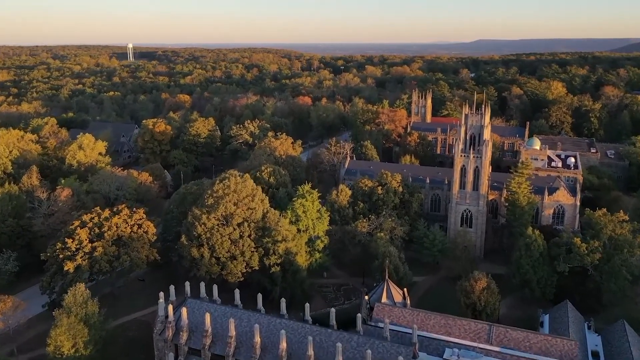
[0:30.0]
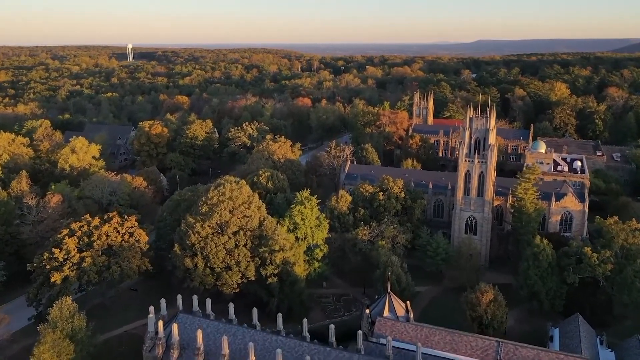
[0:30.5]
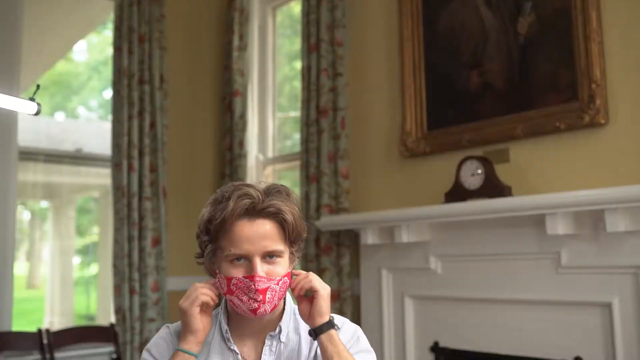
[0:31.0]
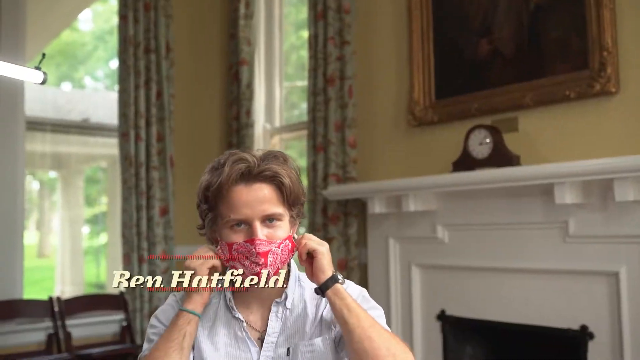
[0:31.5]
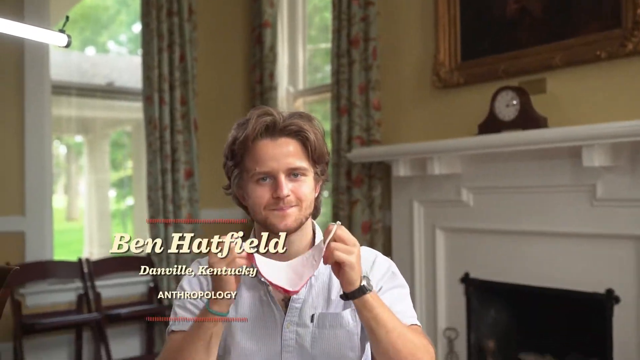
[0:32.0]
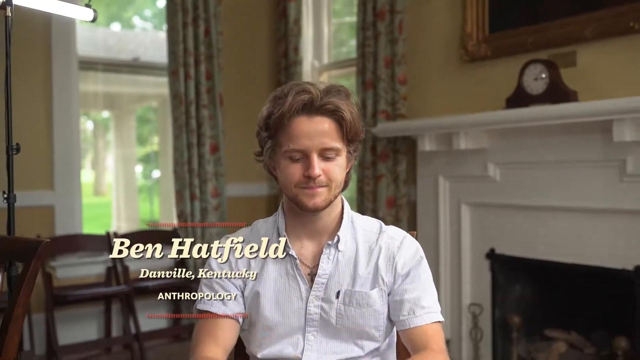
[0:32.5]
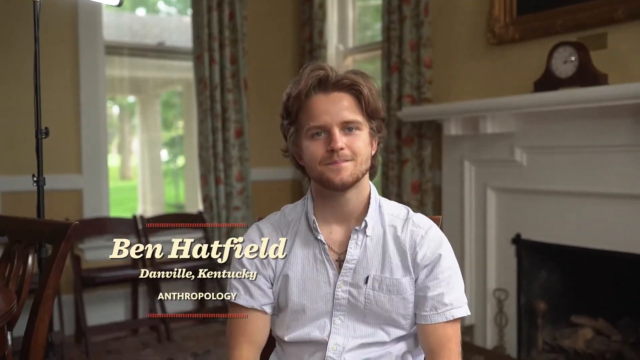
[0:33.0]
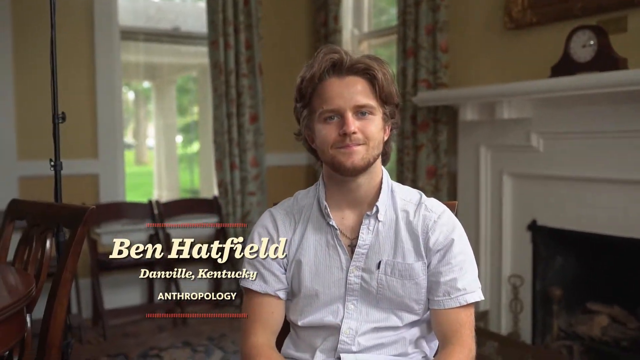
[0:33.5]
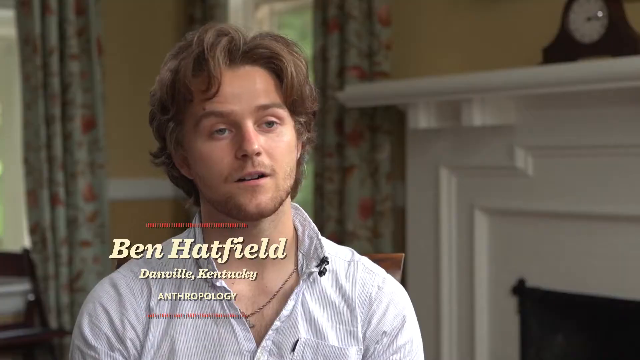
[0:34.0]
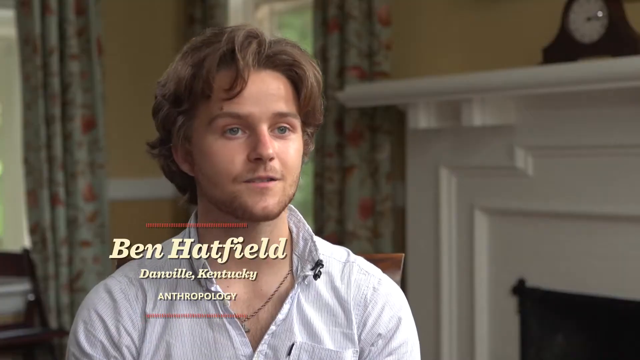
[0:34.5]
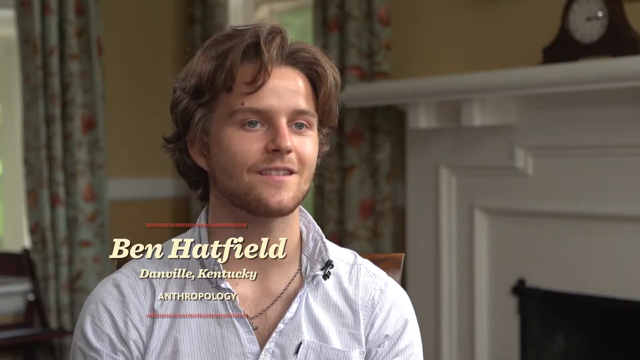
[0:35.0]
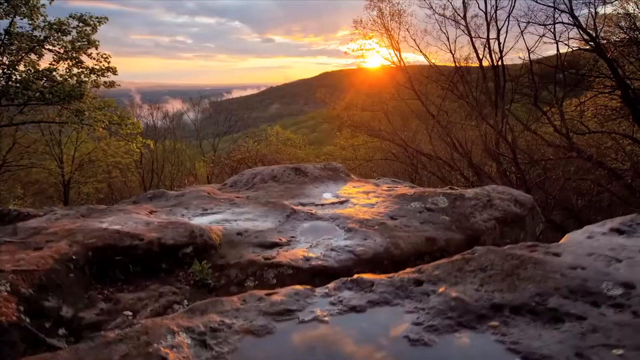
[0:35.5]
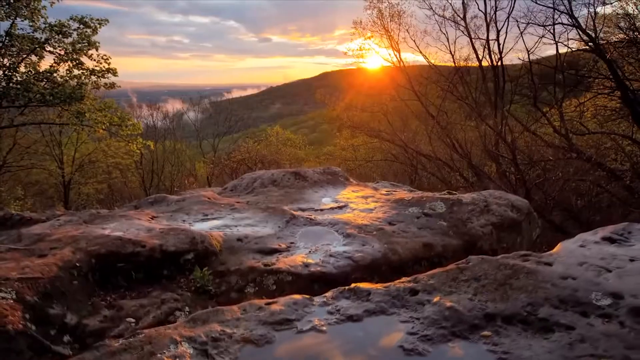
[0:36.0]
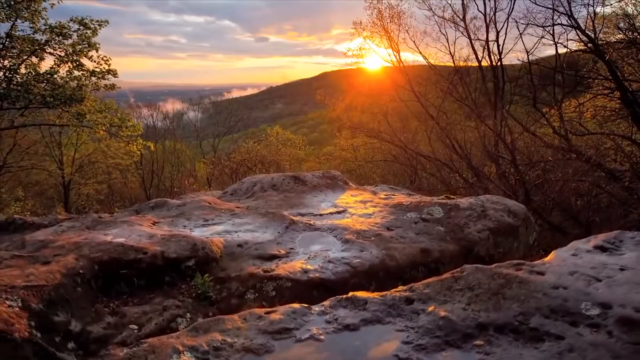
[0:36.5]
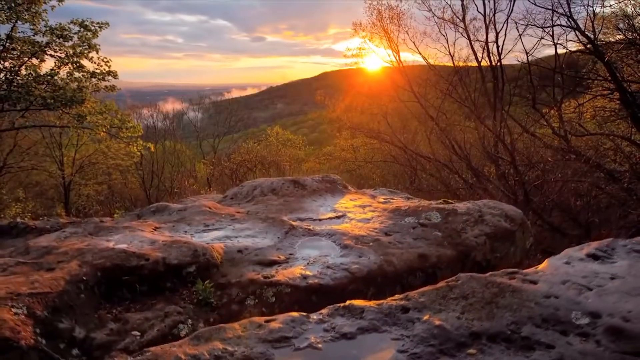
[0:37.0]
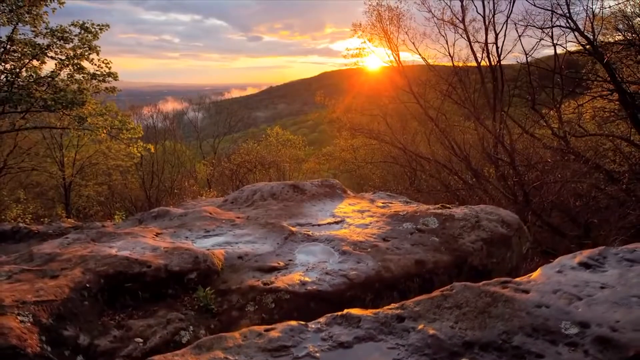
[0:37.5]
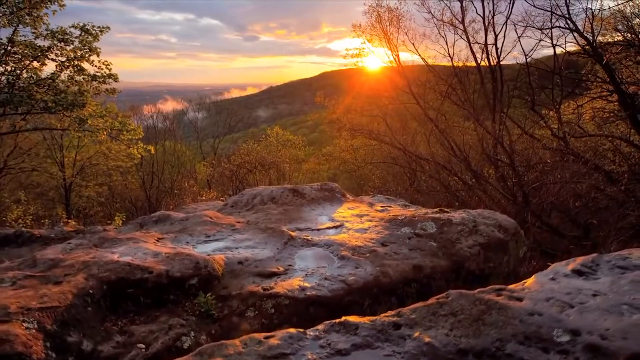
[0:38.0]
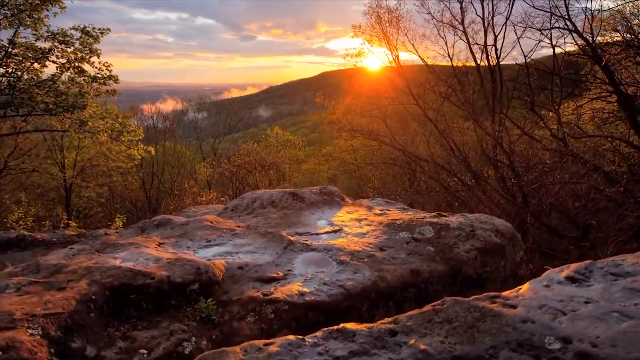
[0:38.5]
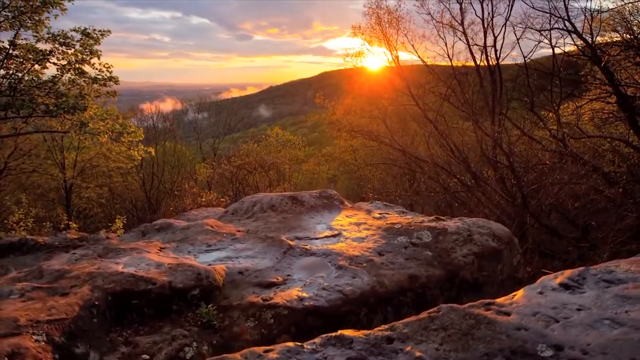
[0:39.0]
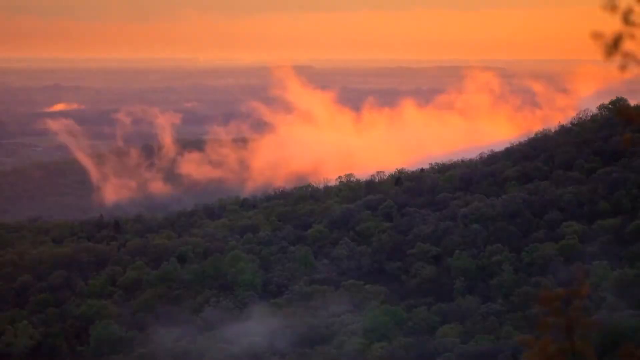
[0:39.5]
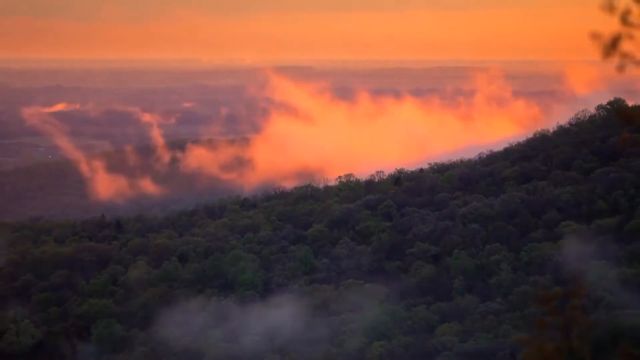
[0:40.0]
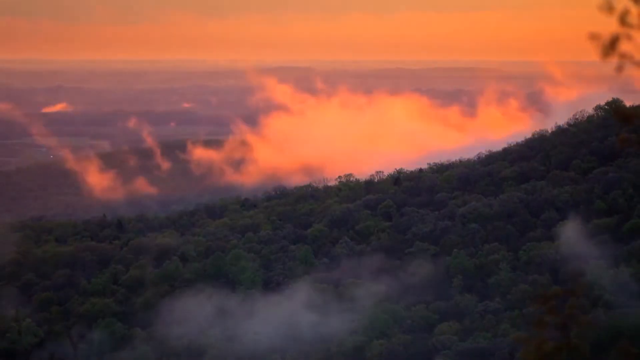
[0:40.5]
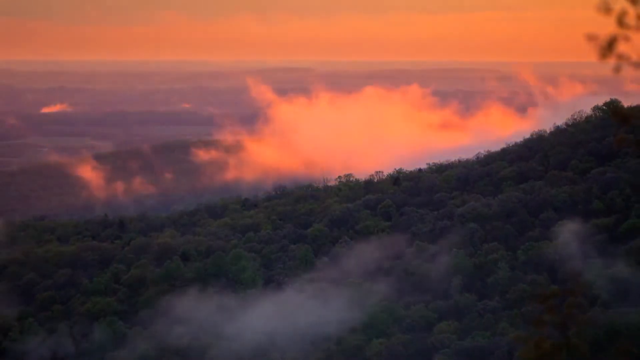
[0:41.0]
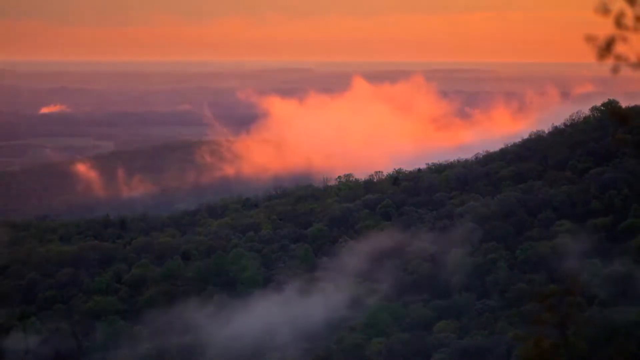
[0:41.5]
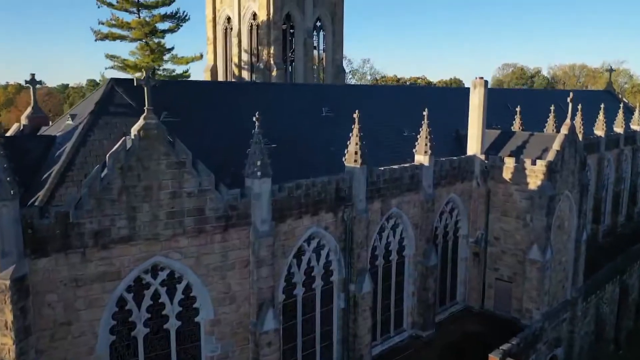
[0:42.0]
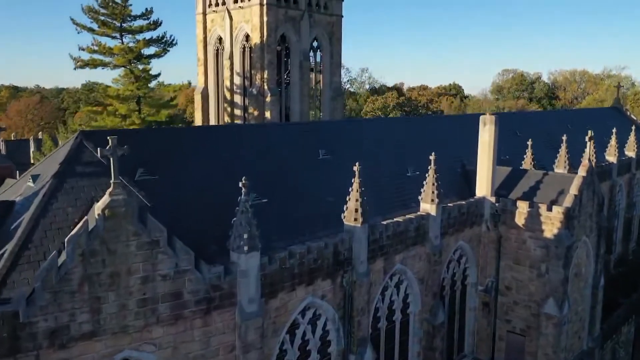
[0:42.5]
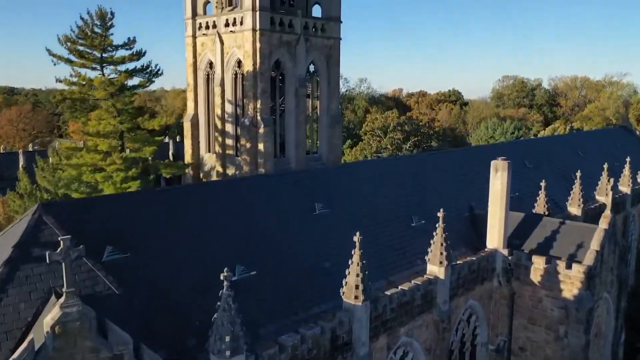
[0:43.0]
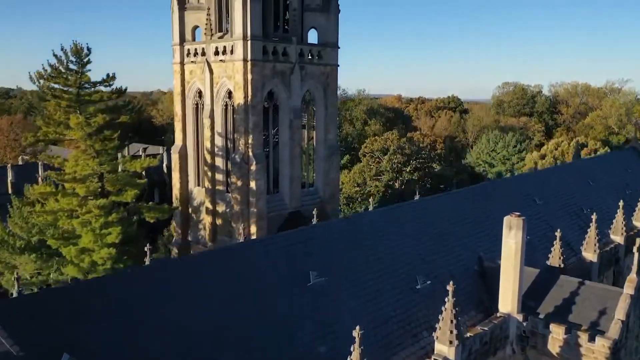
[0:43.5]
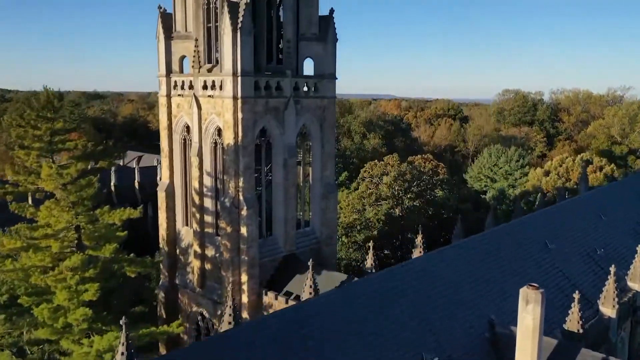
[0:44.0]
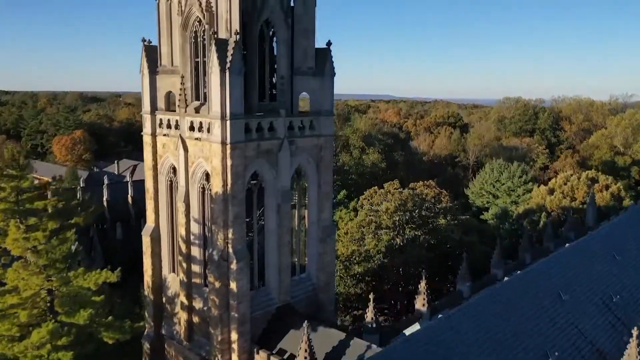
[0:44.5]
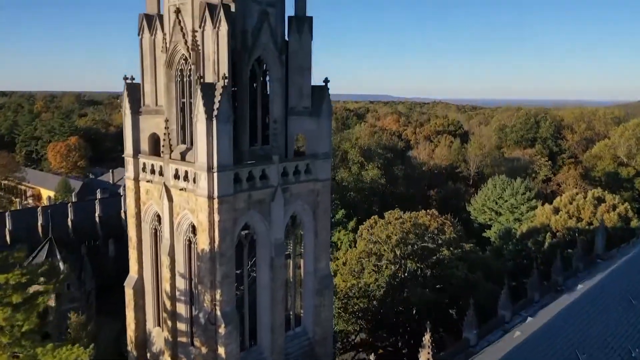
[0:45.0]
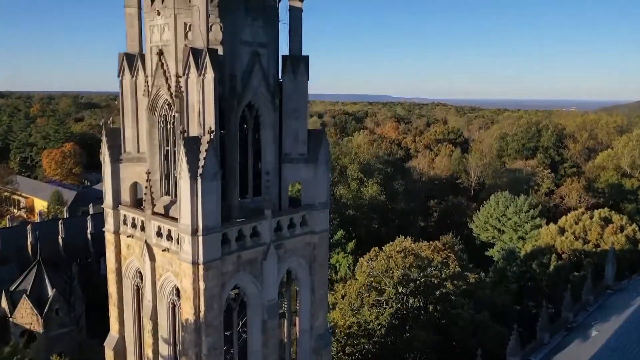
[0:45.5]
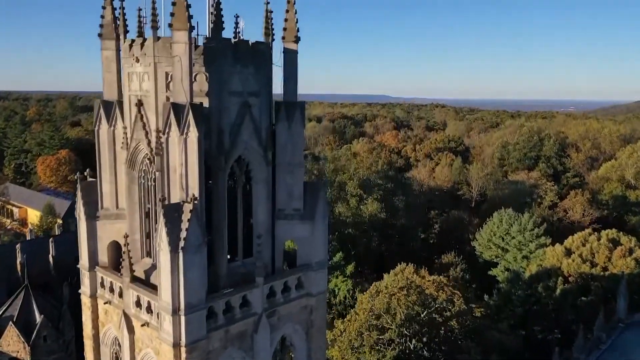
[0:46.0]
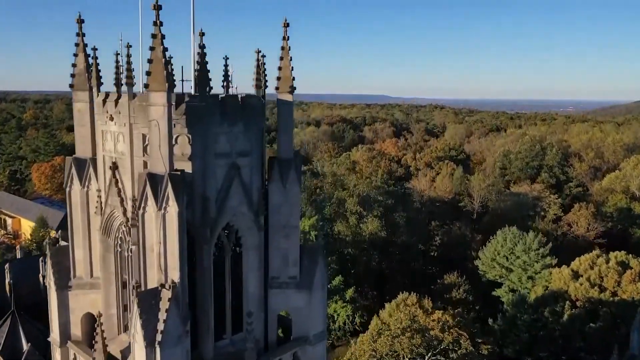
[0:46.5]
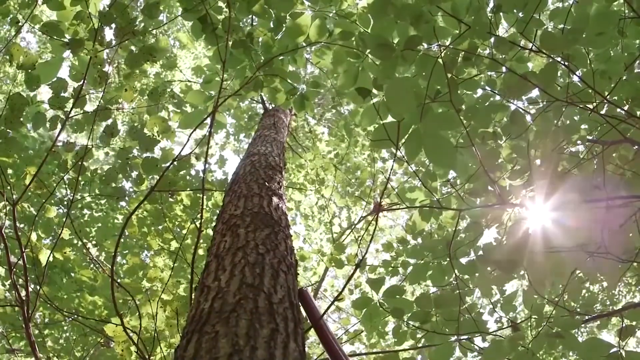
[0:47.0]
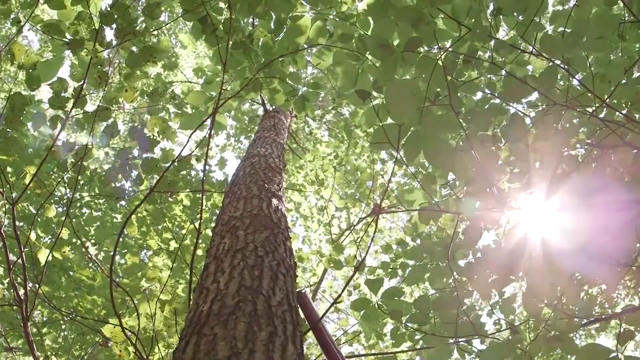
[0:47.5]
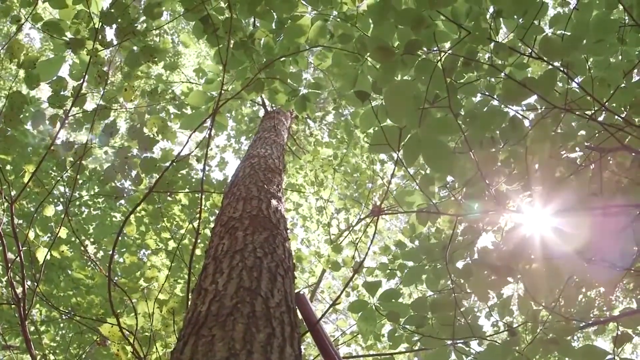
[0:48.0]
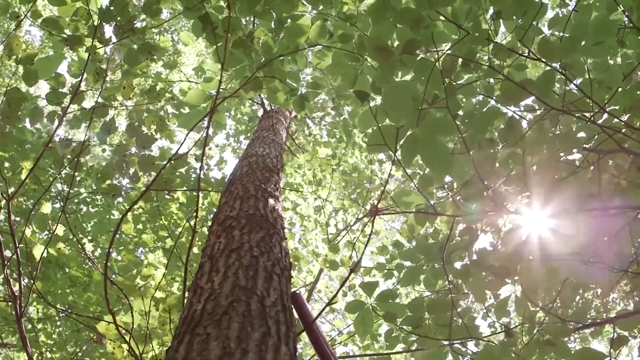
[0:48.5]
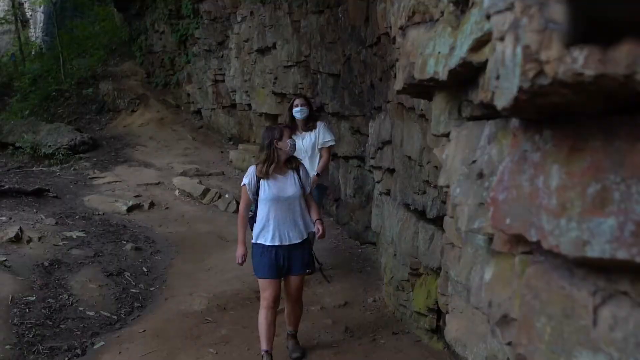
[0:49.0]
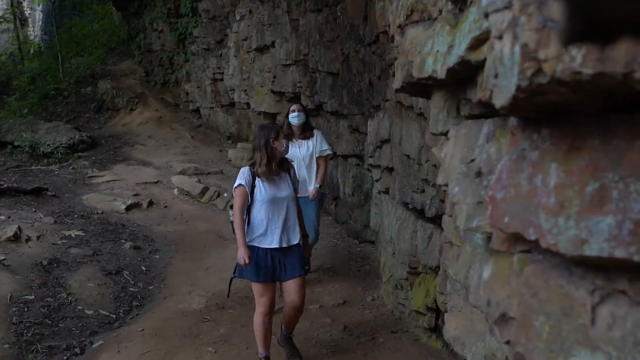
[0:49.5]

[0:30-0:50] The tall grey buildings stand in the middle of the dense forest of many tall trees. The view moves to the inside of the yellow-painted house with the windows and the fireplace, where a blond young man who appears to be in his early 20s is on screen, wearing a short-sleeved light blue shirt. He has a short beard; his name is Ben Hatfield, from Danville, Kentucky, and he is dedicated to anthropology. As he talks to the screen, the video cuts to footage of a few rock formations with the forest in the background, the sun against the hills and a cloudy sky. Another picture shows the forest from a top view, with some smoke coming out of it. Then what seems to be a drone shot goes up and through the big stone buildings, showing their blue roofs, until it reaches the tallest part. The video then cuts to a tree seen from the bottom, with the sun getting through green leaves into the shot.